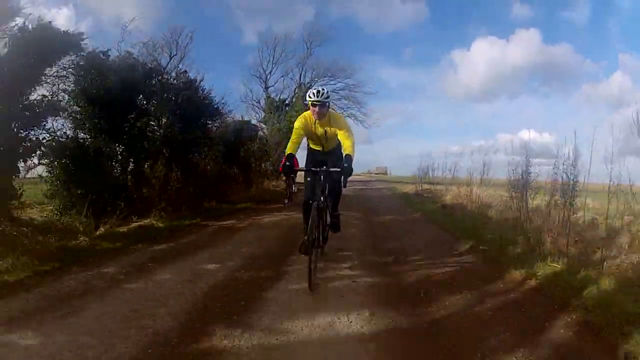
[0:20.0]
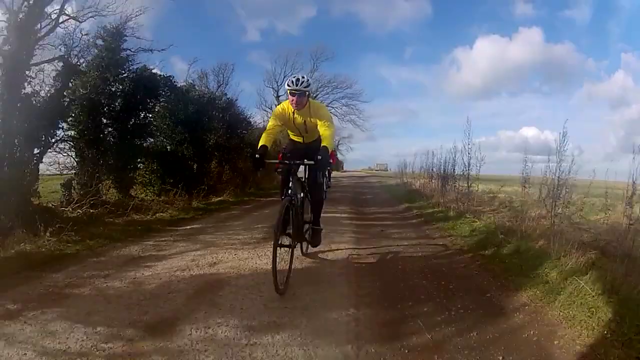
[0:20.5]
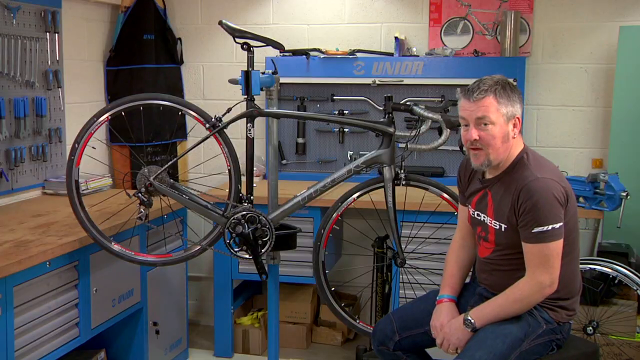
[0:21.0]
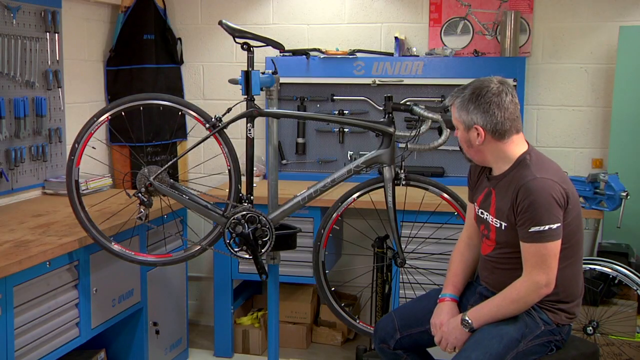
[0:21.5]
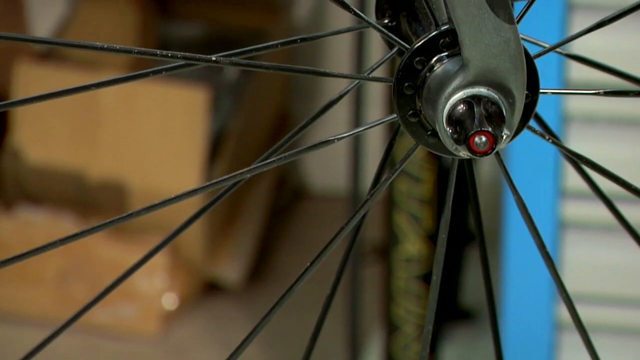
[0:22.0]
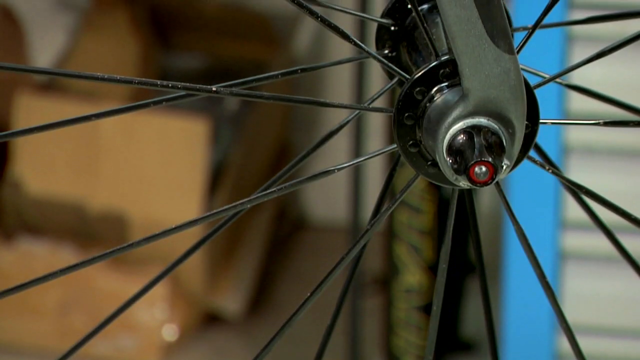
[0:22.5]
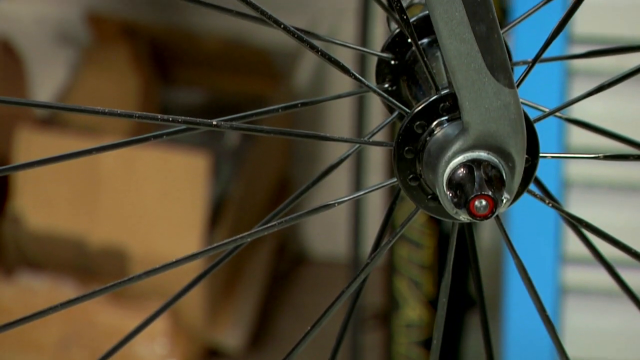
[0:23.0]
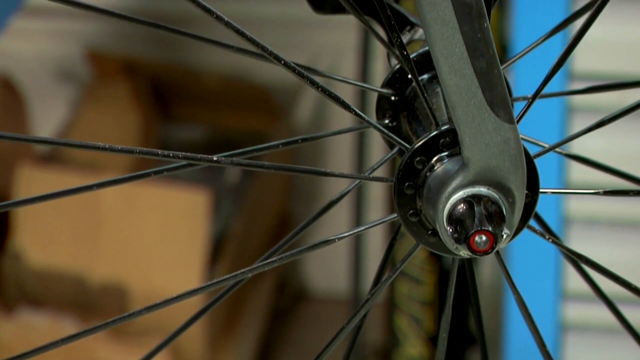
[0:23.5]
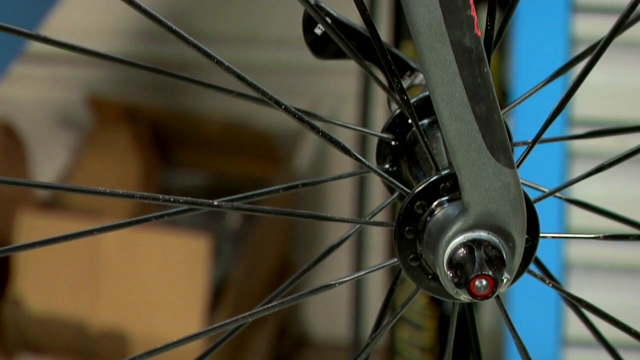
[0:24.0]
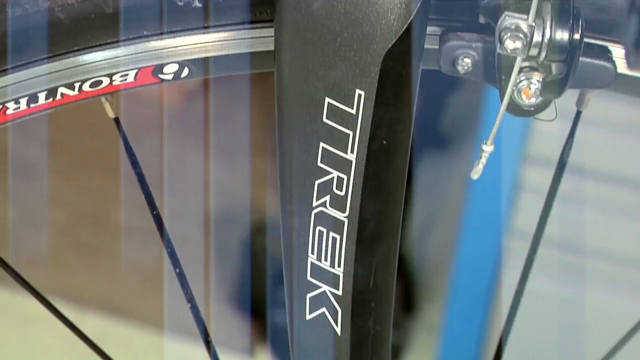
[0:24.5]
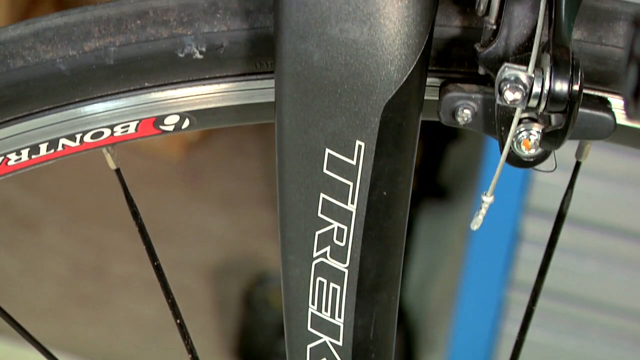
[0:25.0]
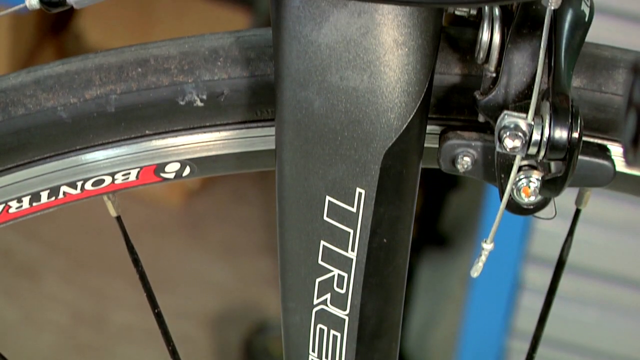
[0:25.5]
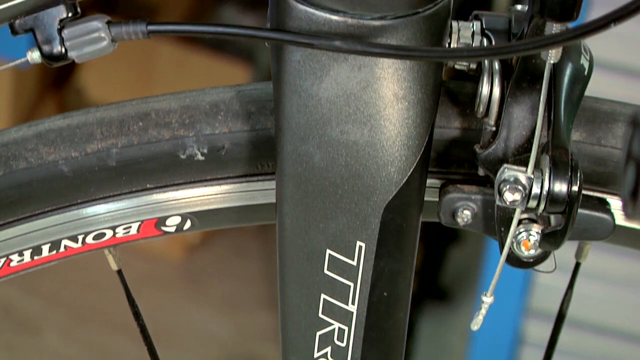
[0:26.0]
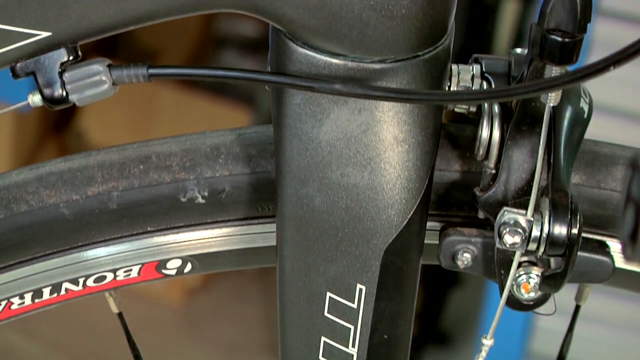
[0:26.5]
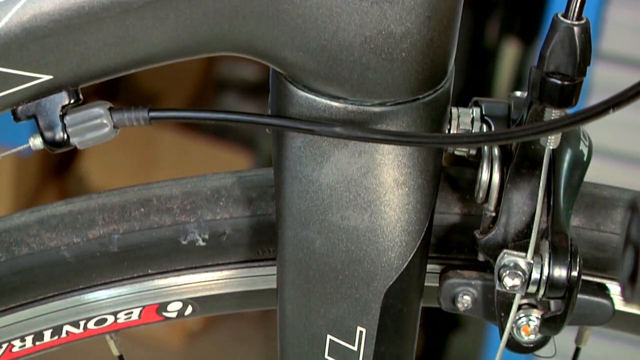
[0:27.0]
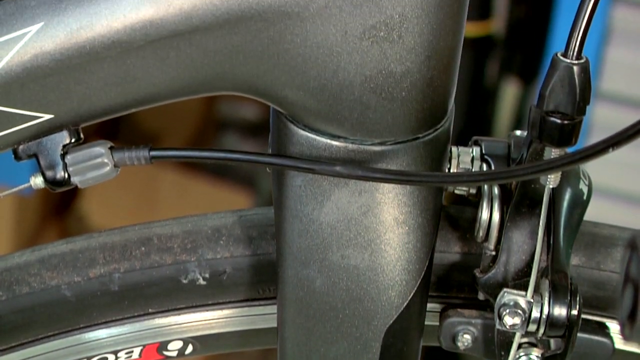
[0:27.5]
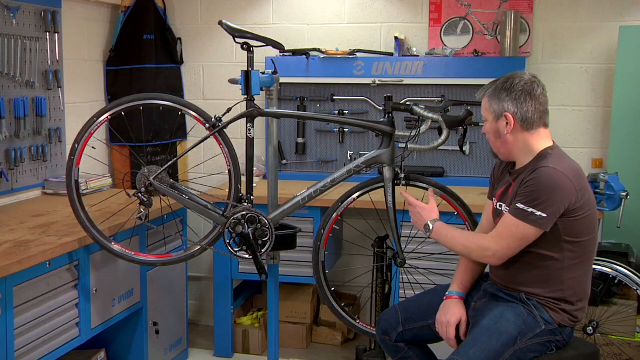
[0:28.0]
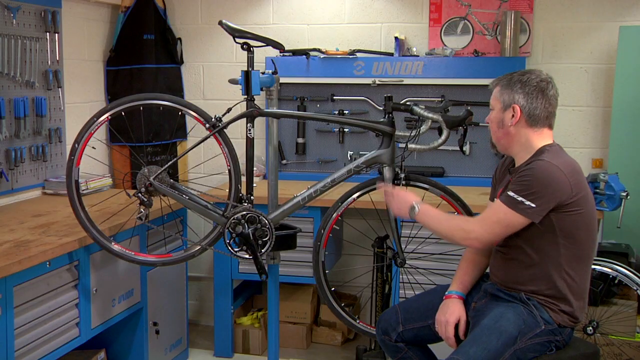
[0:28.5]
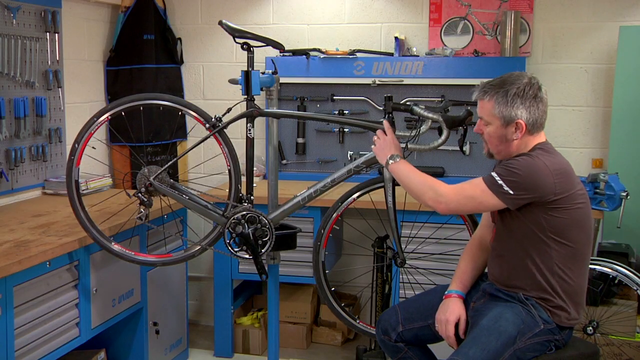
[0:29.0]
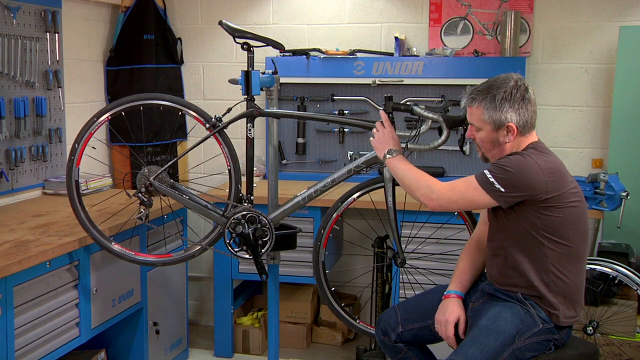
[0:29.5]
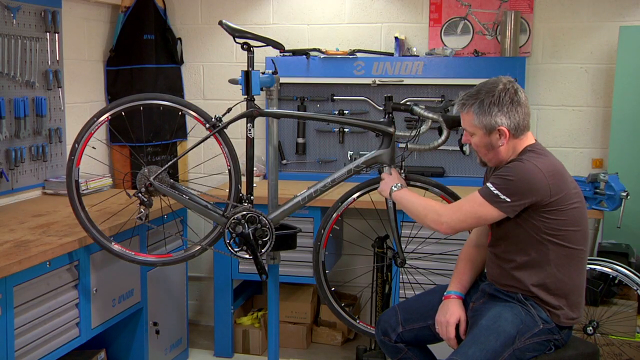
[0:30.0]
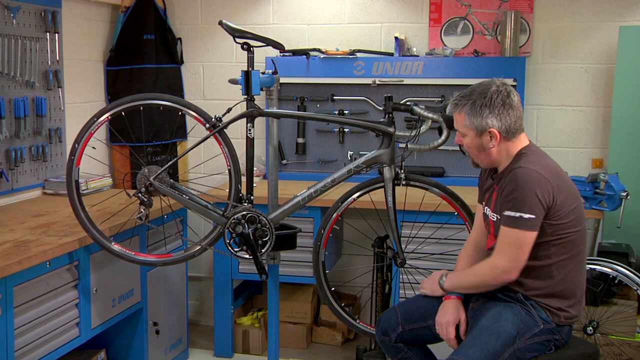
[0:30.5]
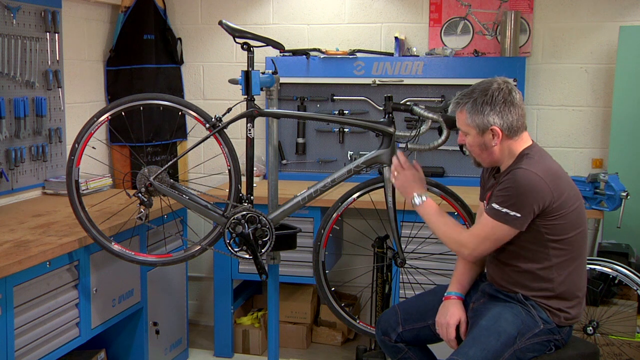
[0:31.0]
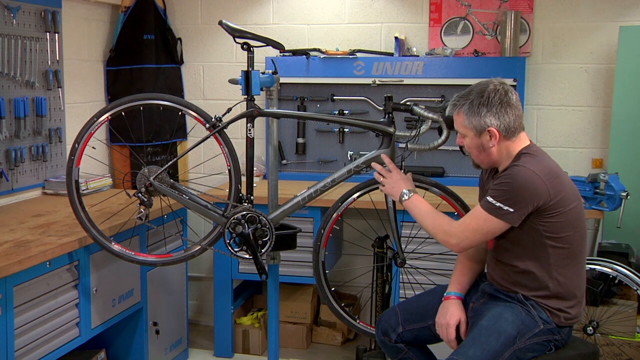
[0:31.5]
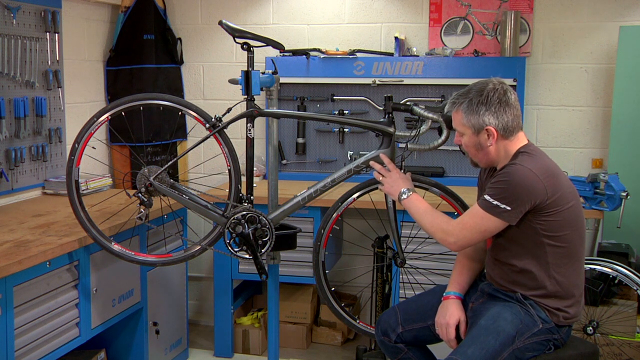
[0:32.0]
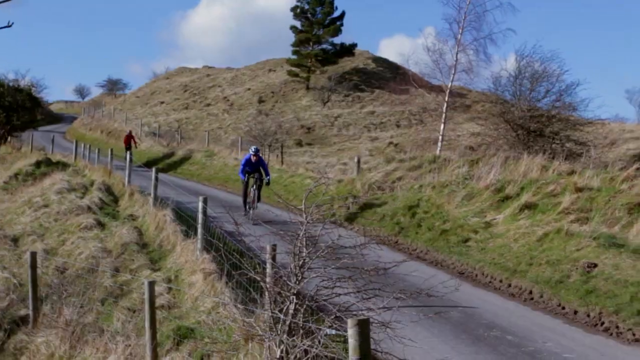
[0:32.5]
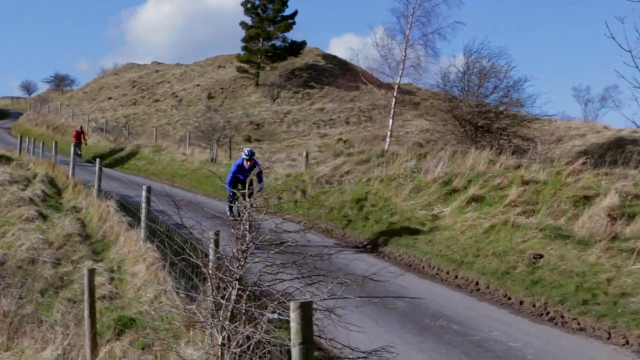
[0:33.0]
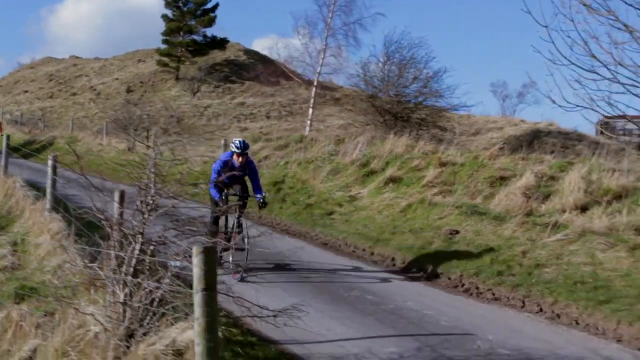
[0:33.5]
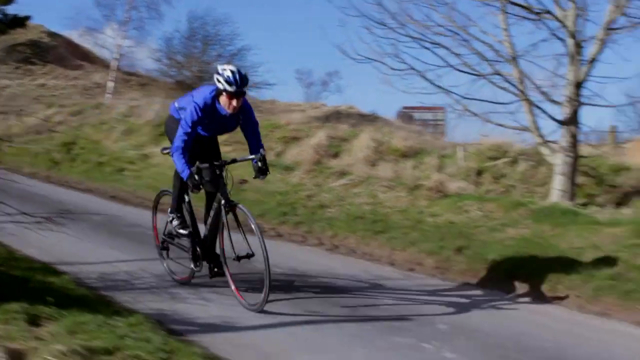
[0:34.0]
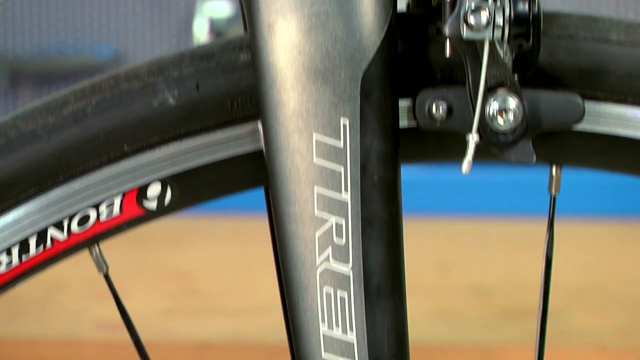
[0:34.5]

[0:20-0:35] The title screen for Cycling Plus Bike of the Year 2013, Trek Domain 4.3, is followed by a big text information screen. The video cuts to the same workshop, where the gentleman sits next to the bike talking about it, with the same zoomed-in image of the crossbars that say "Trek" and "Domain". Again it cuts to people racing on a dirt track through a field, wearing racing gear, and then back to the gentleman beside the bike with different close-ups: the spokes in the center of the wheel, and a view going up the fork that holds the wheel in place. He is turned toward the bike, motioning to and pointing at different parts of it while speaking. Then an individual rider in a blue jersey rides the bike along a dirt track.